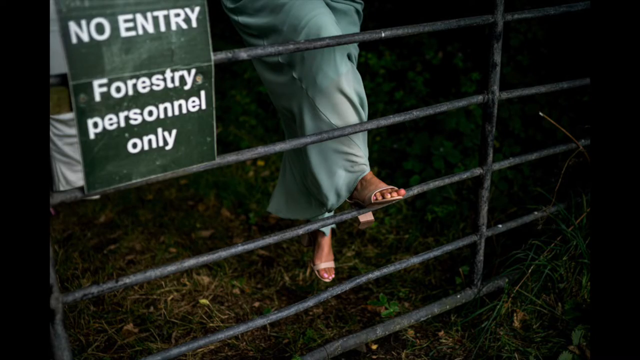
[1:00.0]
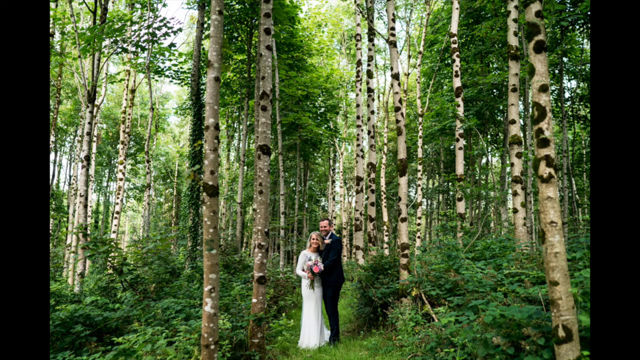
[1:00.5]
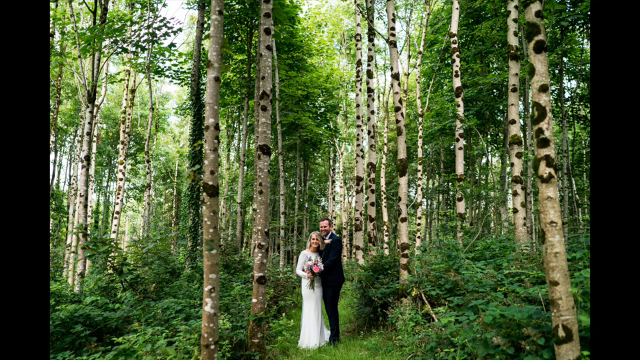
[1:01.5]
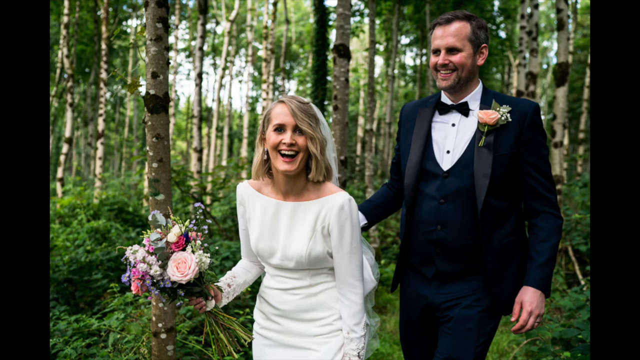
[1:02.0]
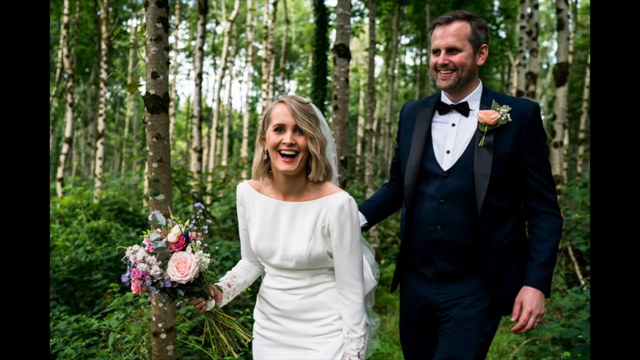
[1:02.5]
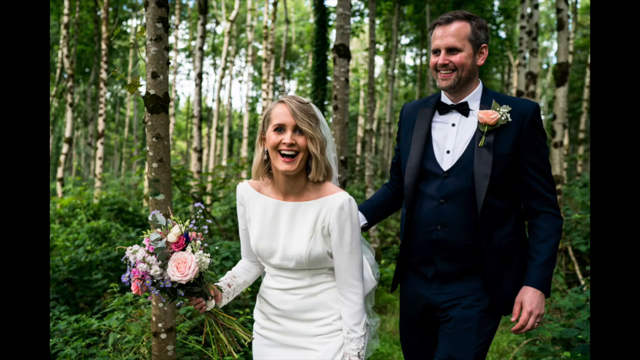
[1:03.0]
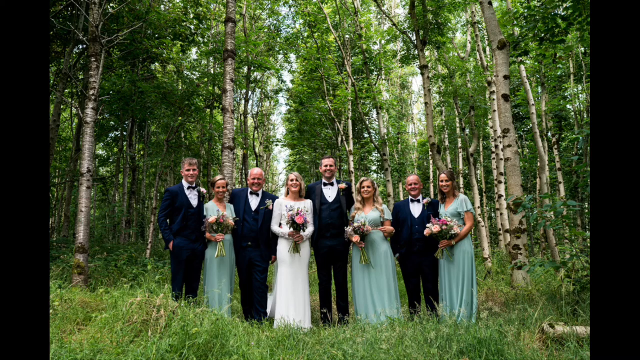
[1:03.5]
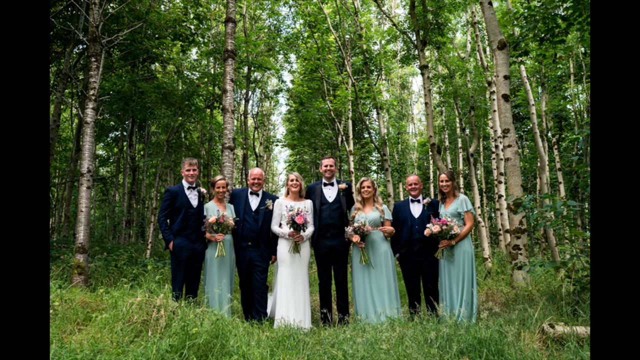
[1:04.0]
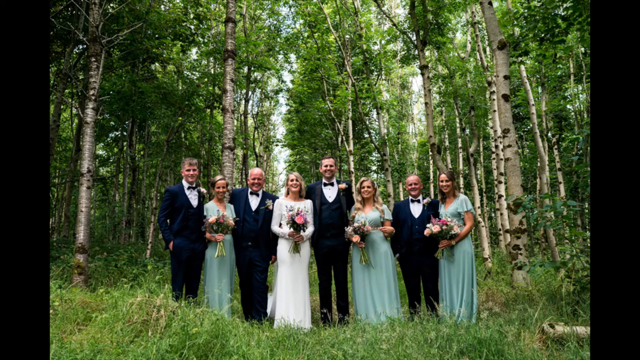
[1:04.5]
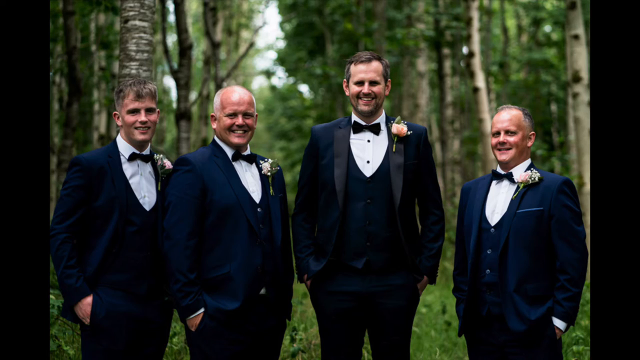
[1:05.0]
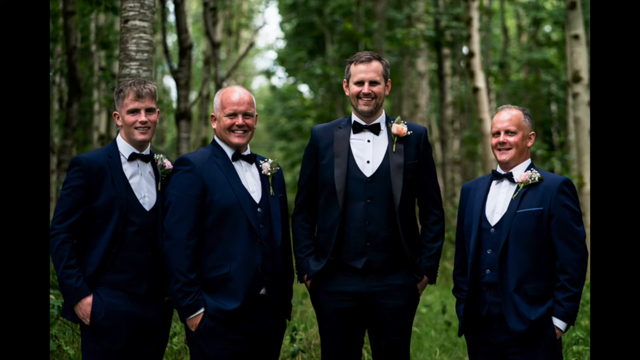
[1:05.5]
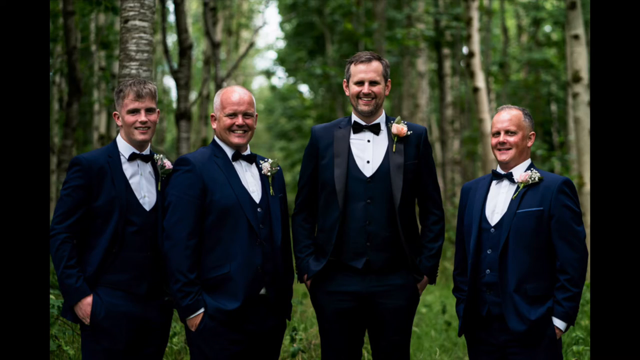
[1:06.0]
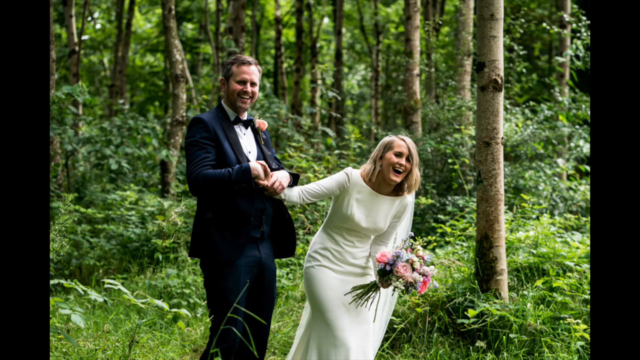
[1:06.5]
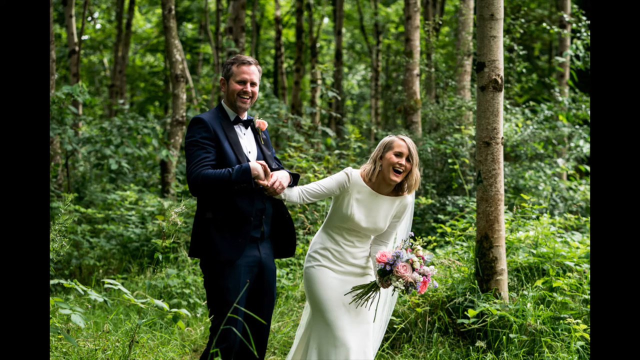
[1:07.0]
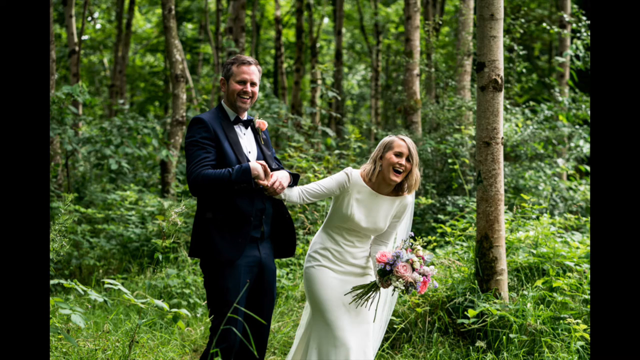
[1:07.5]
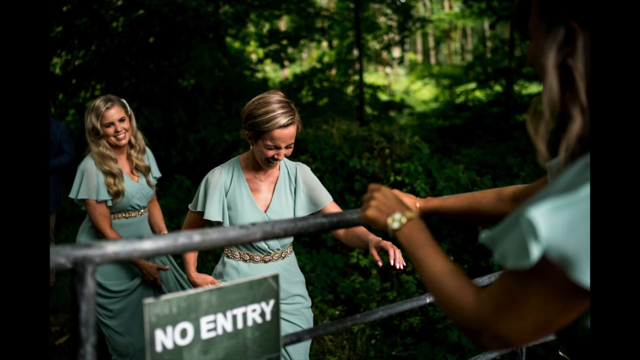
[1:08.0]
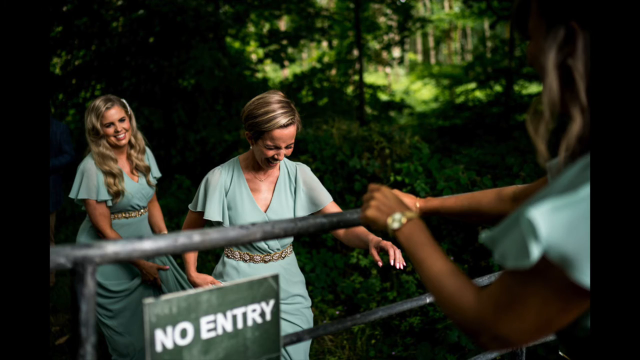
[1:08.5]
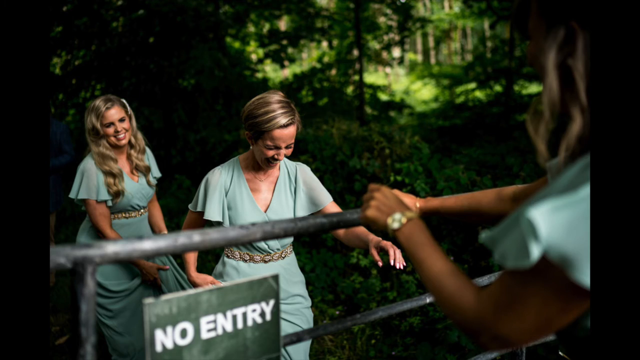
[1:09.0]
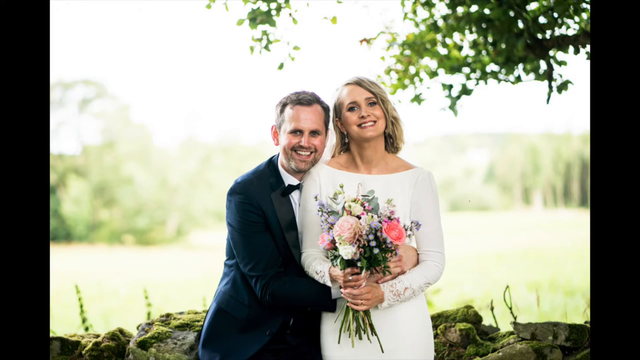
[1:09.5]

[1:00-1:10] The bride wears neutral-colored, flat-heeled strappy sandals. A distant shot shows the bride and groom among tall, moss-spotted trees, followed by more candid shots of the bridal party, of just the groomsmen, and of a bridesmaid trying to climb the gate that says "no entry". In a photo of the bride and groom, she sits on his lap against a scenic country backdrop. The forested area is nothing but forest, with a small open clearing where they stand amid the trees; there is still a lot of light, though it is not very bright. In the wedding party shots, everybody holds a bouquet of flowers and the groomsmen all have their hands in their pockets.